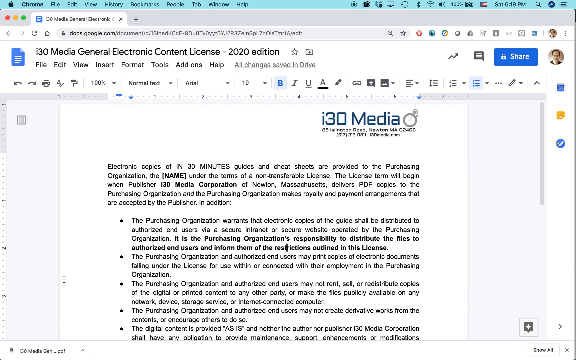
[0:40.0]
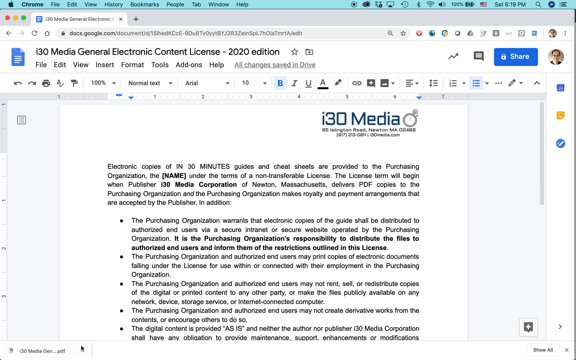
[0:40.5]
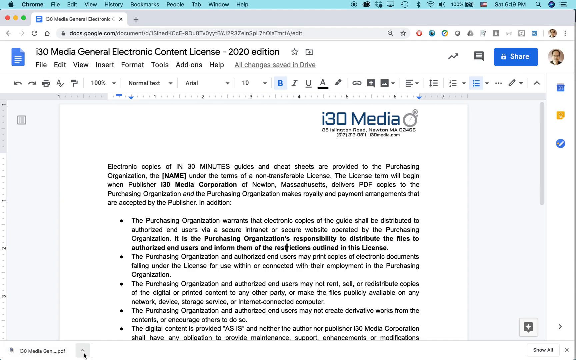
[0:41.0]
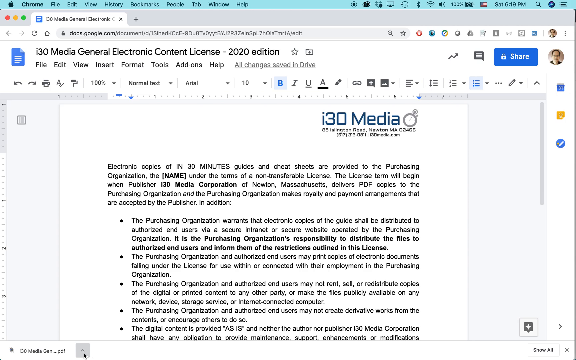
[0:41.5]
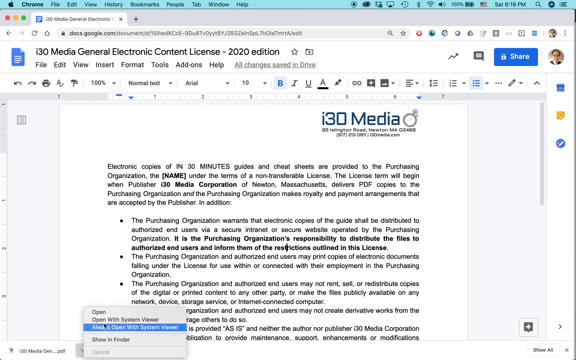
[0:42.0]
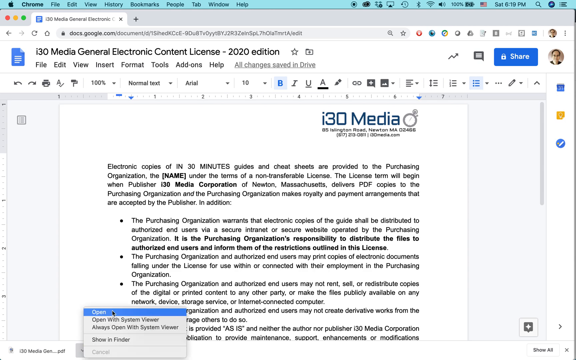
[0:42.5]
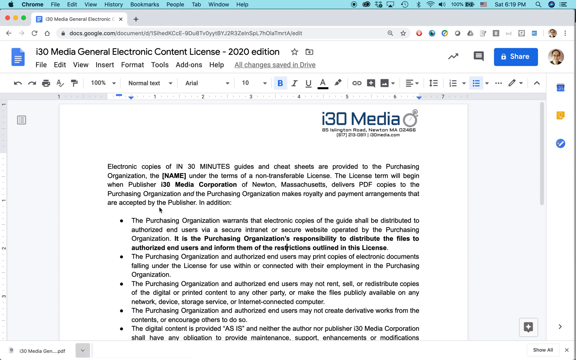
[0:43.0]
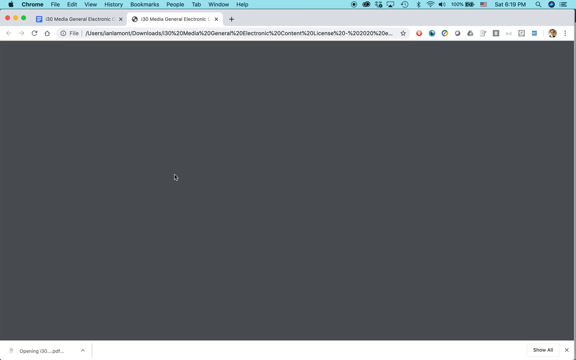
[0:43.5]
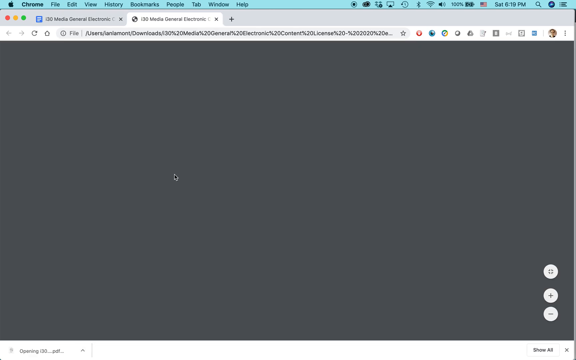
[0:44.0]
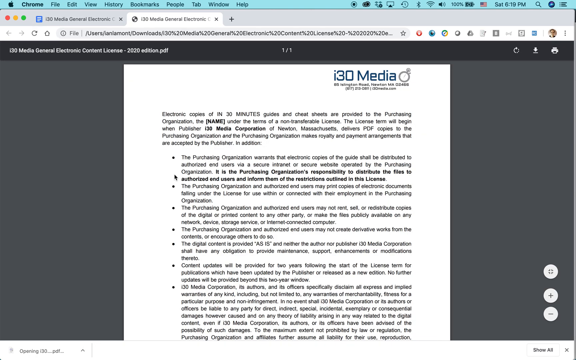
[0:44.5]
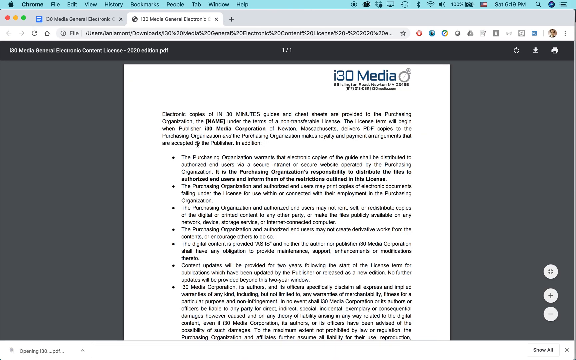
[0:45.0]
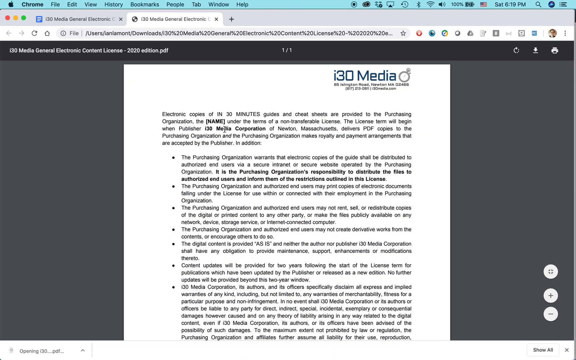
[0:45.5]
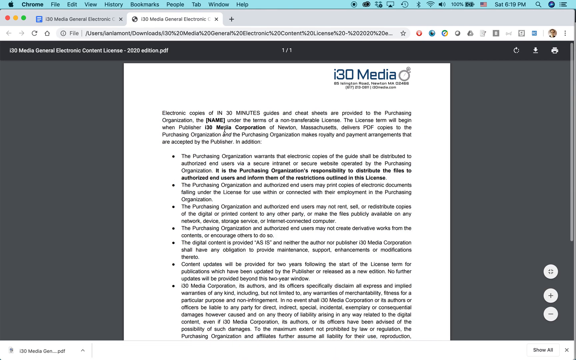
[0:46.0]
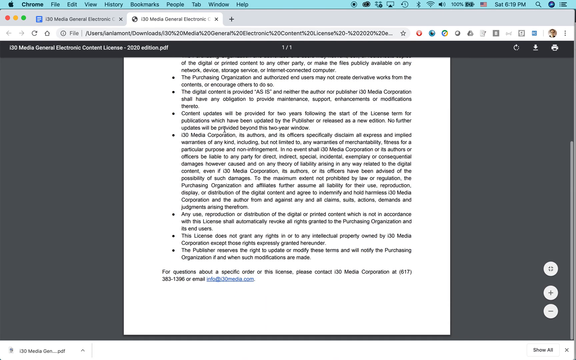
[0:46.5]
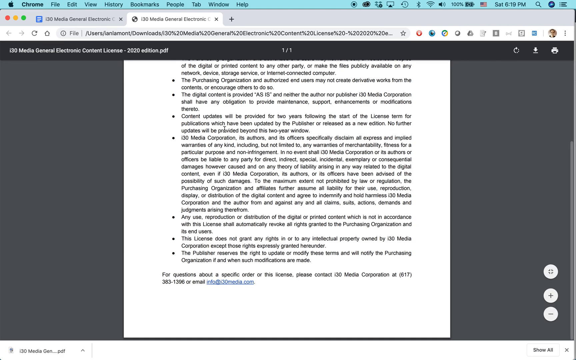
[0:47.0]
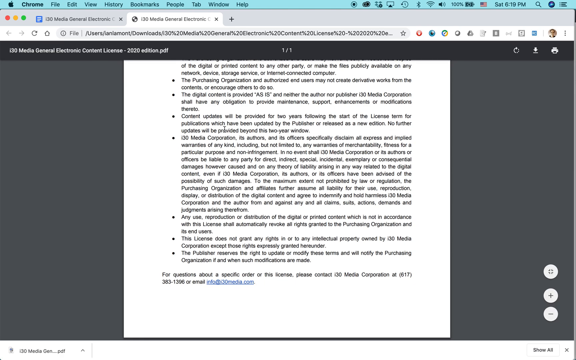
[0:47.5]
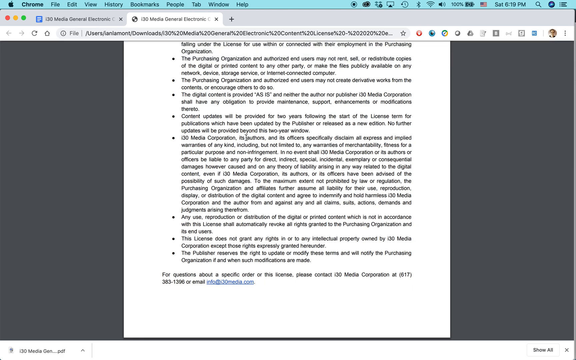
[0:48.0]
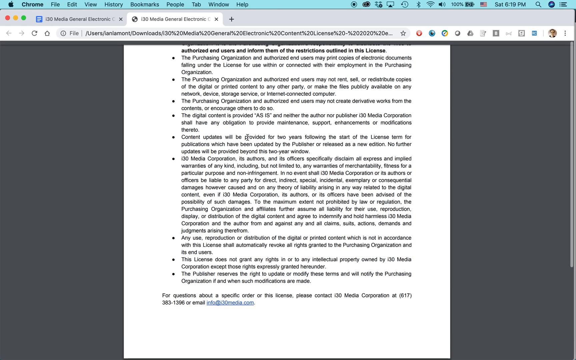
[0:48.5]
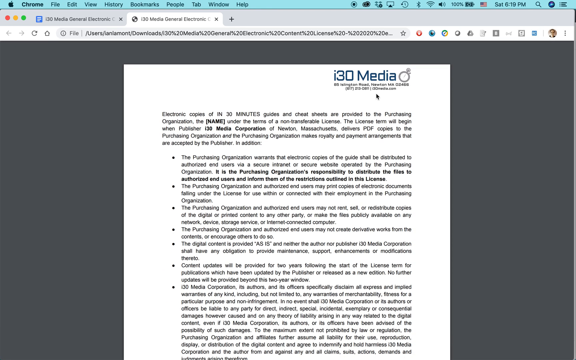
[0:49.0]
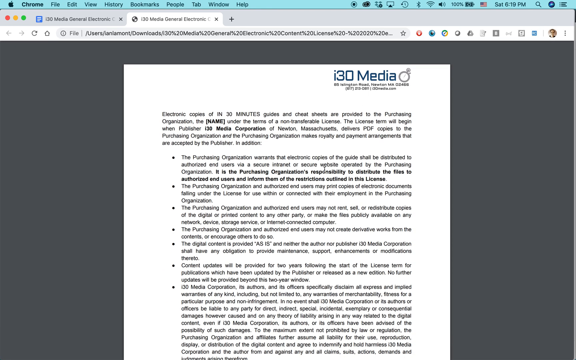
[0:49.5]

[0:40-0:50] The Google Docs page remains on the same section, and then the PDF version of the document opens, showing that the PDF of the 130-media General Electrician's Content License 2020 edition was successfully created from the Google Docs application. No humans or animals appear, and the shot ends after showing the downloaded PDF file.